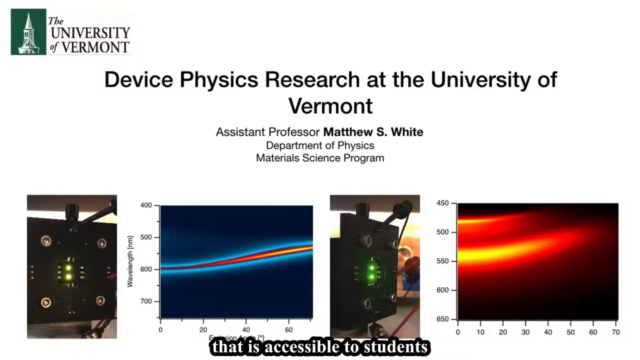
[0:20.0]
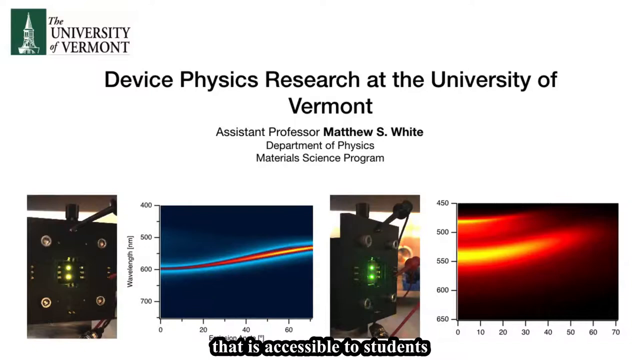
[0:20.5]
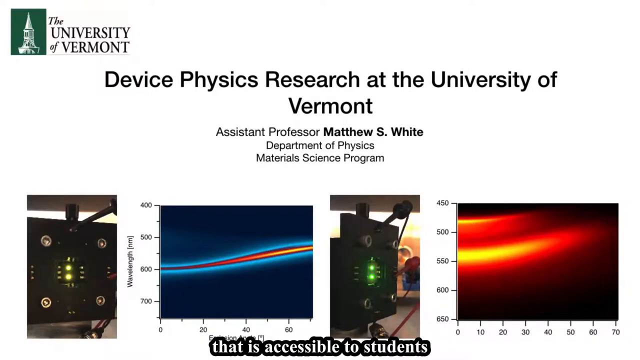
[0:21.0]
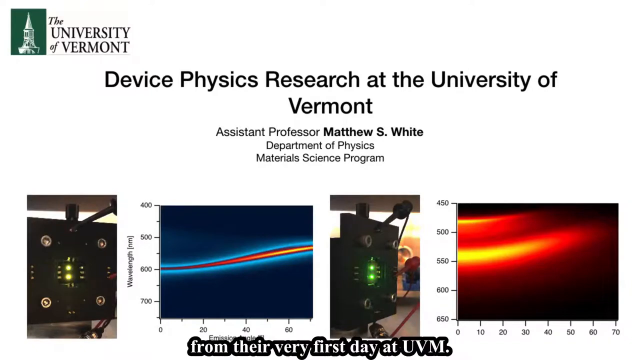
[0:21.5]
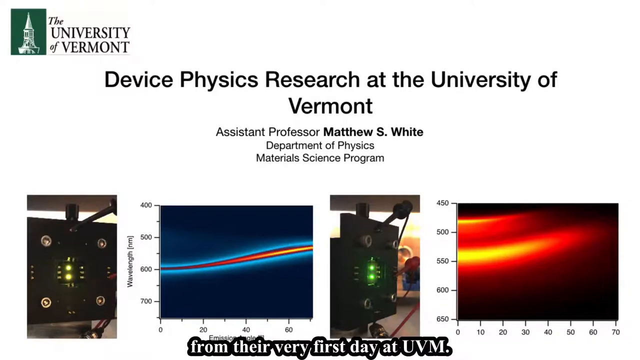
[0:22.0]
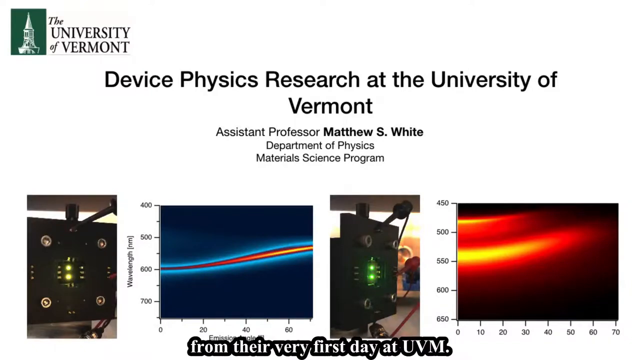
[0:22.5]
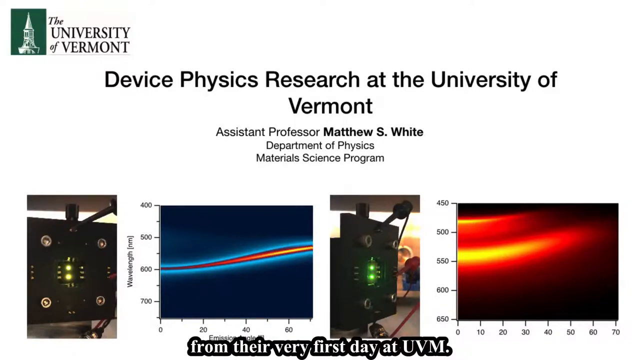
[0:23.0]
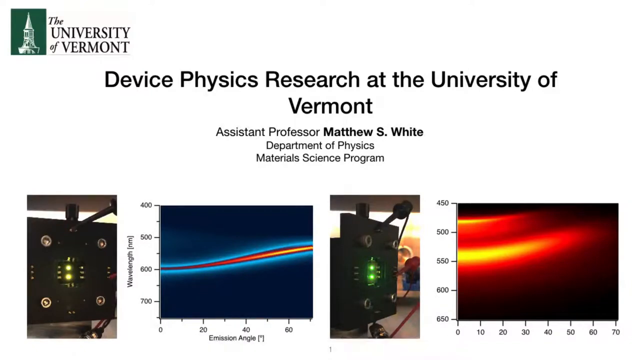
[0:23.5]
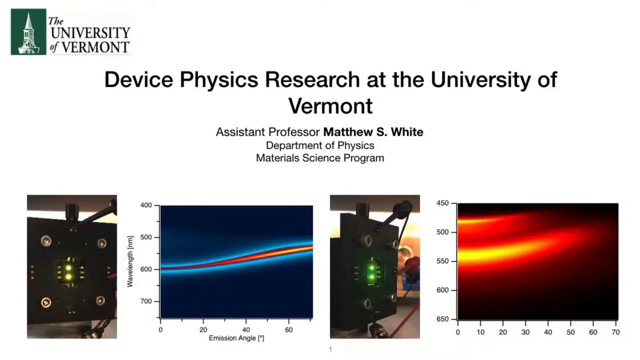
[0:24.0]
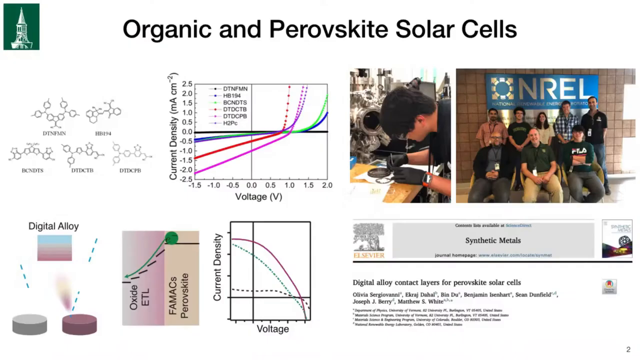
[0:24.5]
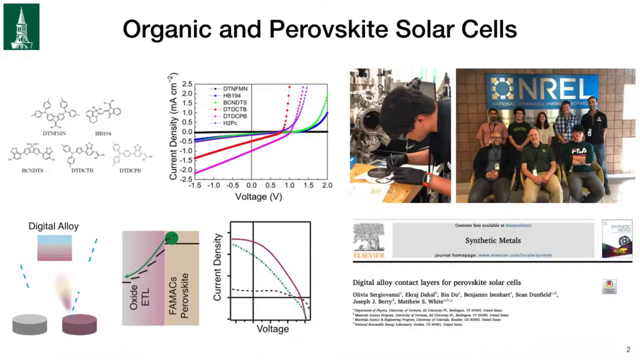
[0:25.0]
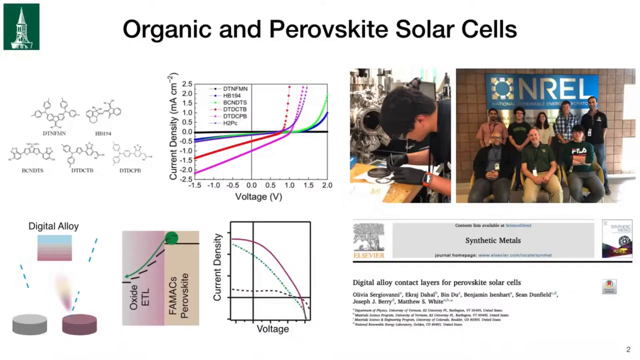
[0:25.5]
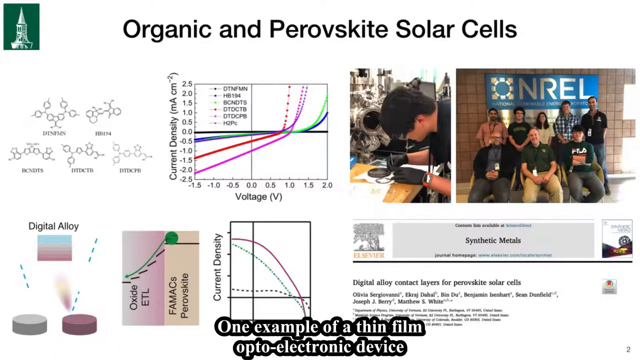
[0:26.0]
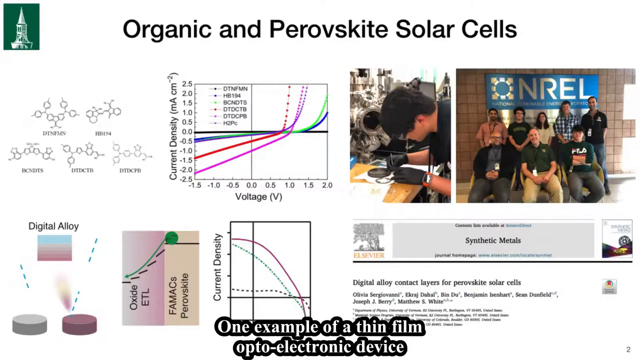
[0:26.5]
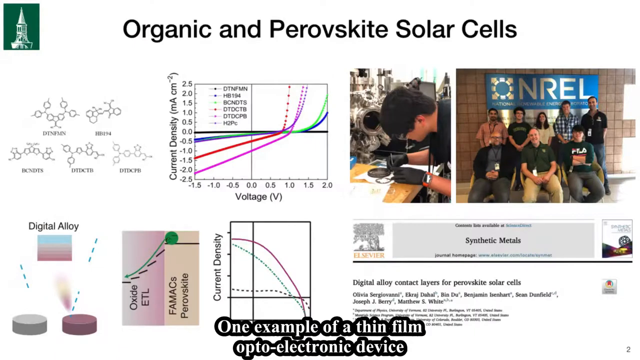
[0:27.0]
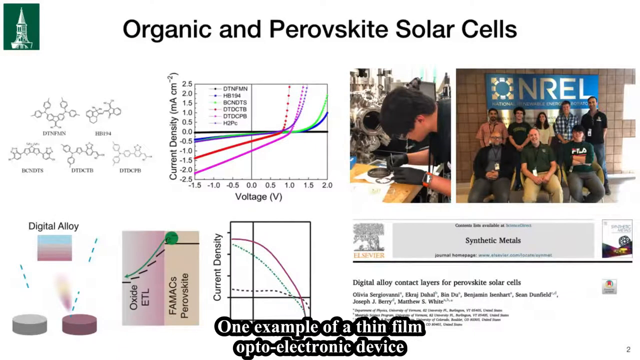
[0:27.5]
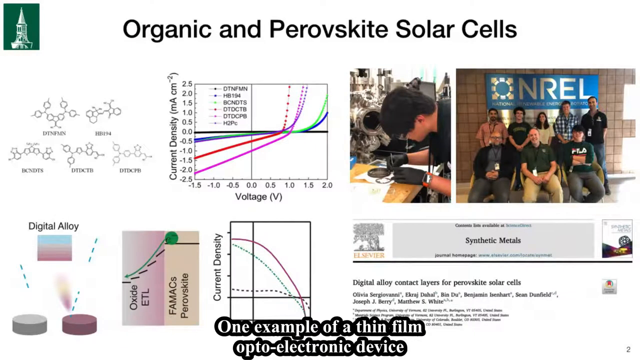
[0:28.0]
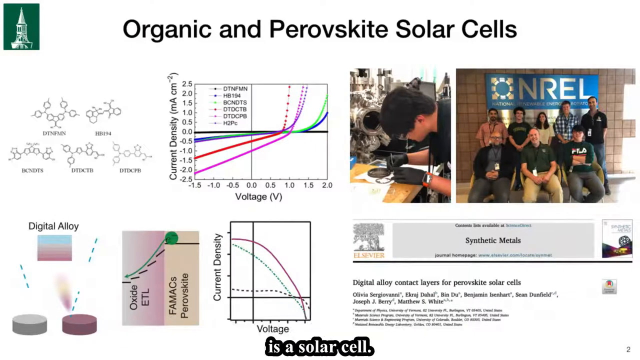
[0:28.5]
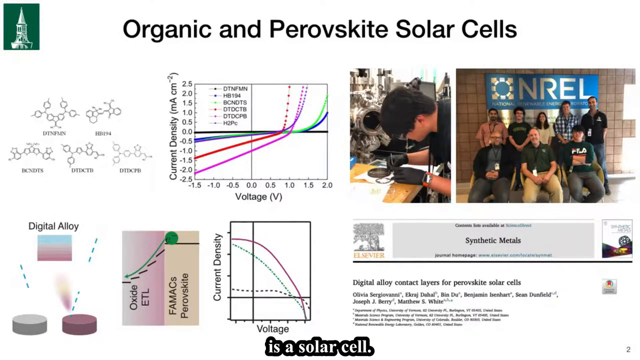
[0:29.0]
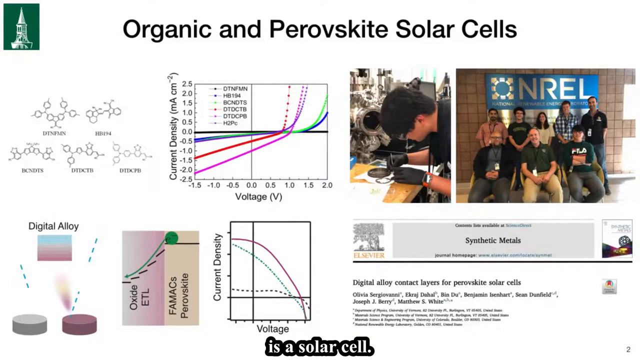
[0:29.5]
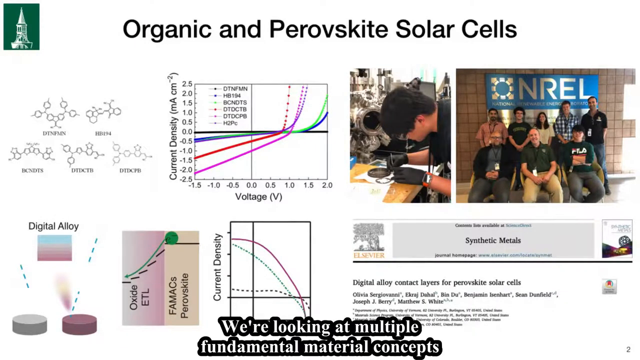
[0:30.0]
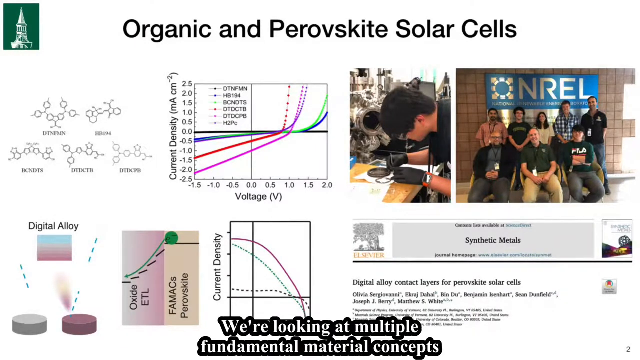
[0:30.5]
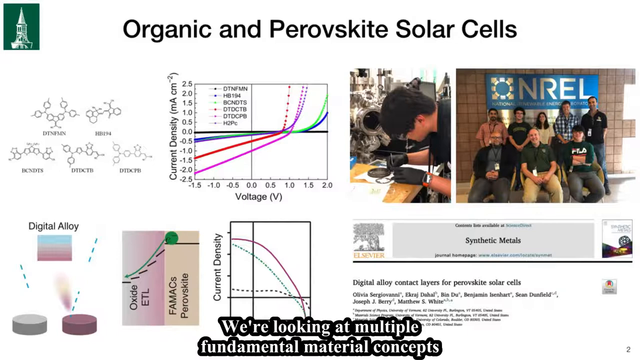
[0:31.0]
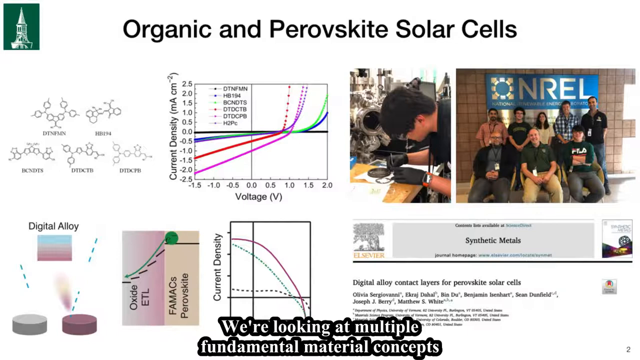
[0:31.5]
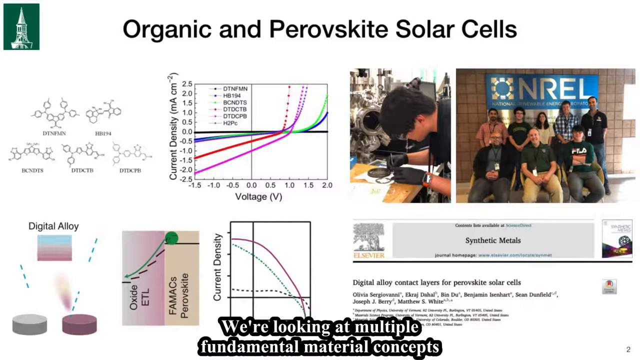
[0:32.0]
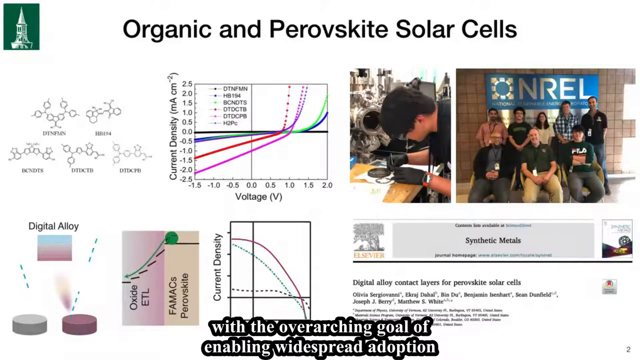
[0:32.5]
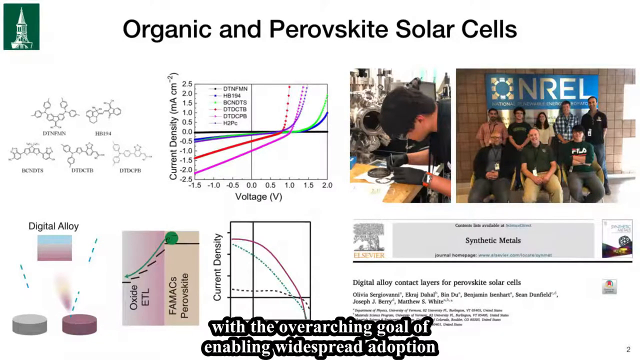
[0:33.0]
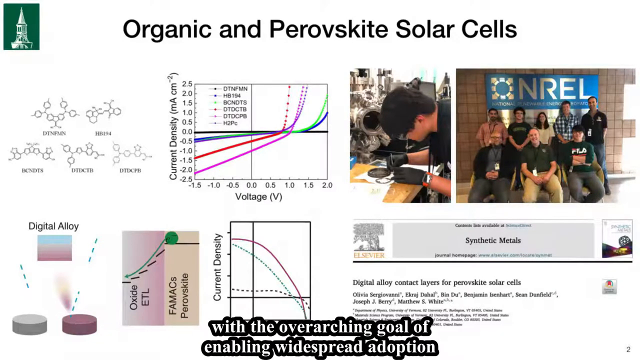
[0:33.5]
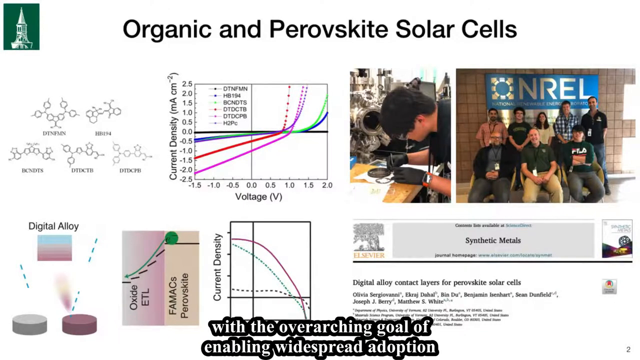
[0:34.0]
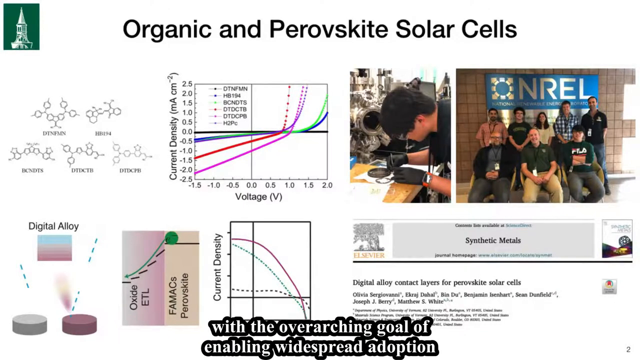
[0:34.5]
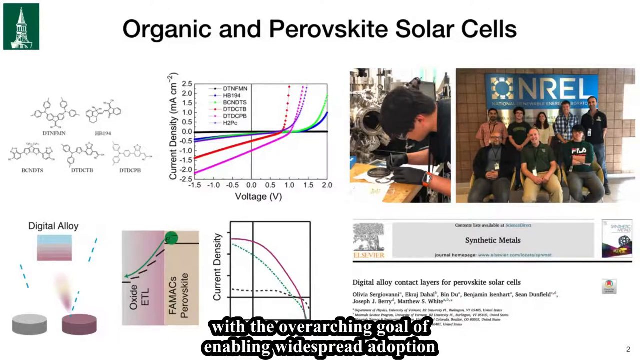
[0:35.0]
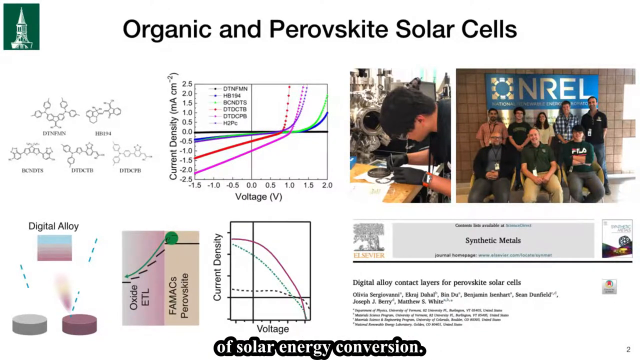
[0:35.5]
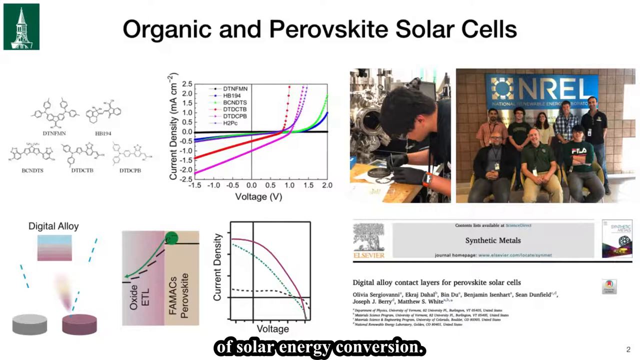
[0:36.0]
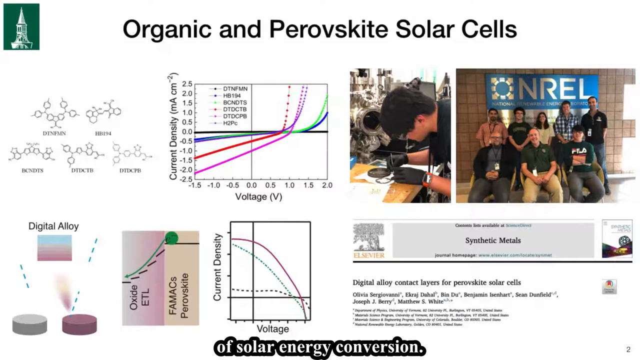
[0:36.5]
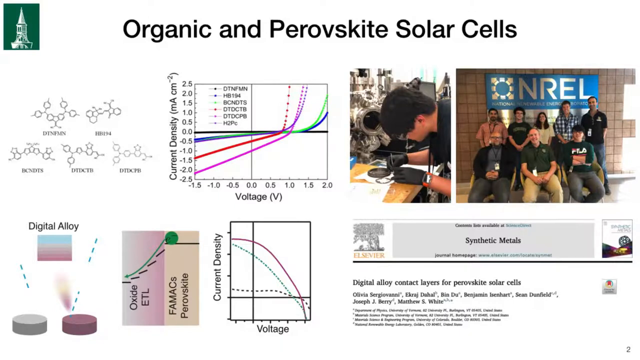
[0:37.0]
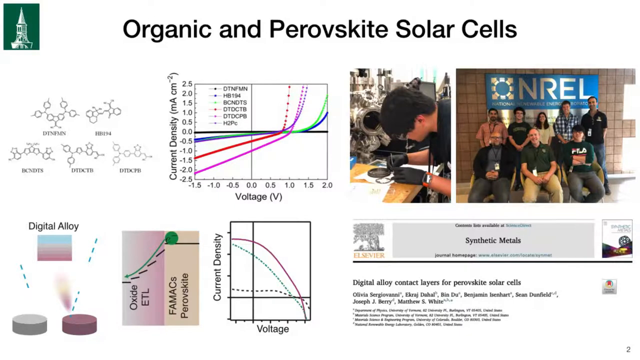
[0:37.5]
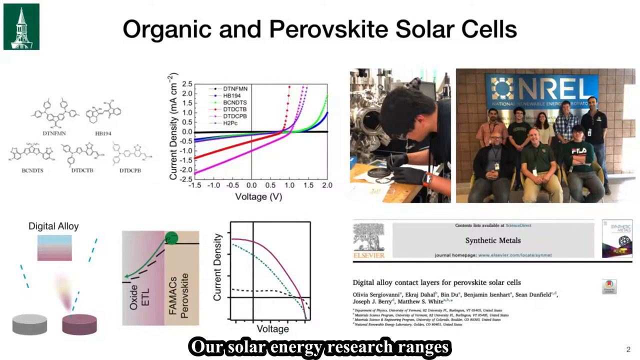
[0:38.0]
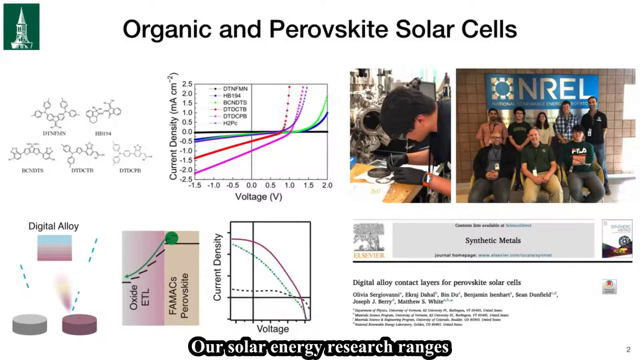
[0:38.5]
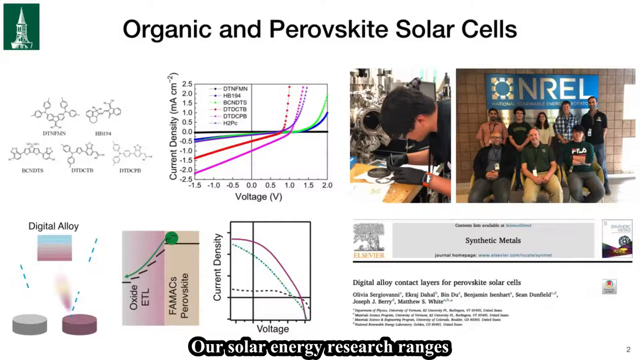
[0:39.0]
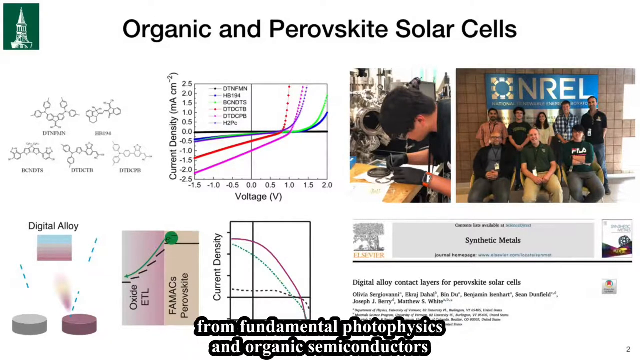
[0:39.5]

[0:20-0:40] Assistant Professor Matthew S. White continues his presentation, with captioning at the bottom of the video. At one point he speaks about organic and perovskite solar cells. Various graphics are displayed: a picture of several individuals behind a sign that says "NREL," a slide titled "synthetic metals," a slide showing voltage and current density, a slide showing digital alloy, and a graphic showing oxidized ETL. He says they are looking at multiple fundamental material concepts.